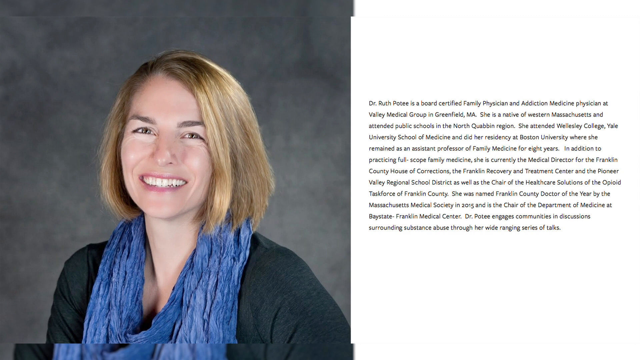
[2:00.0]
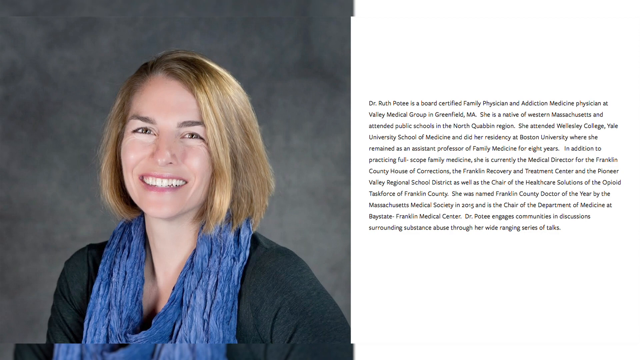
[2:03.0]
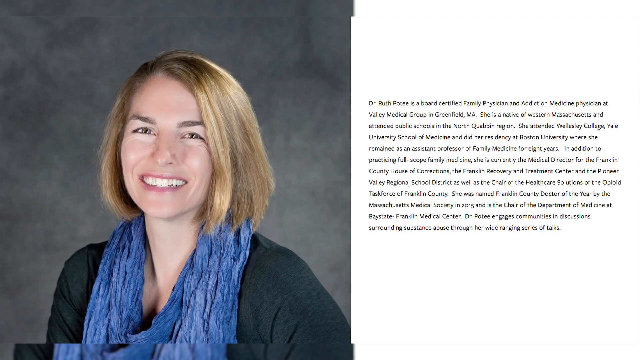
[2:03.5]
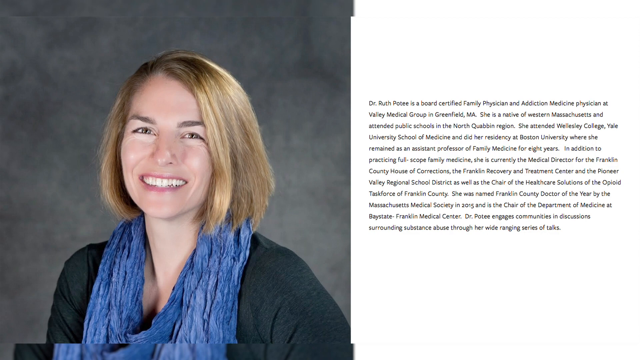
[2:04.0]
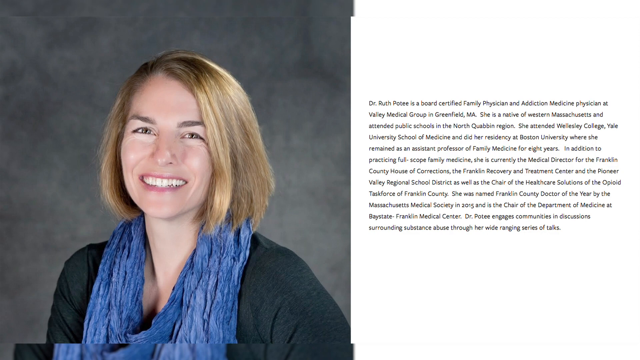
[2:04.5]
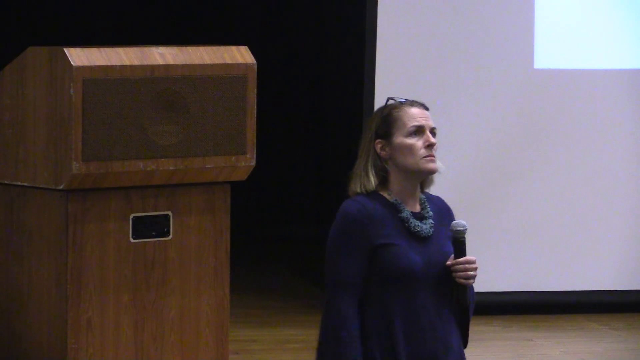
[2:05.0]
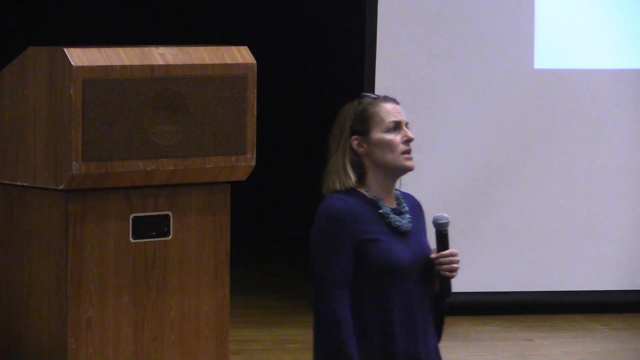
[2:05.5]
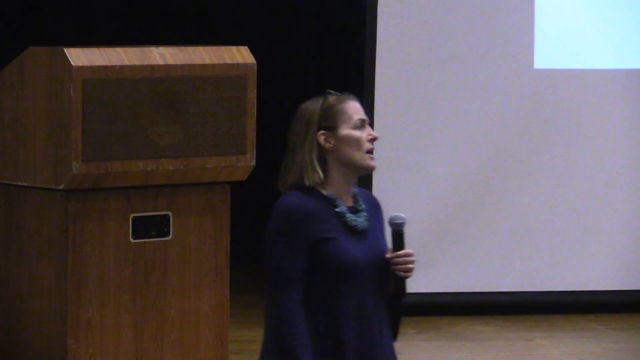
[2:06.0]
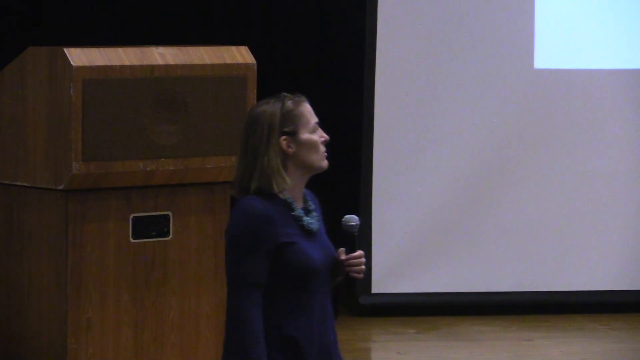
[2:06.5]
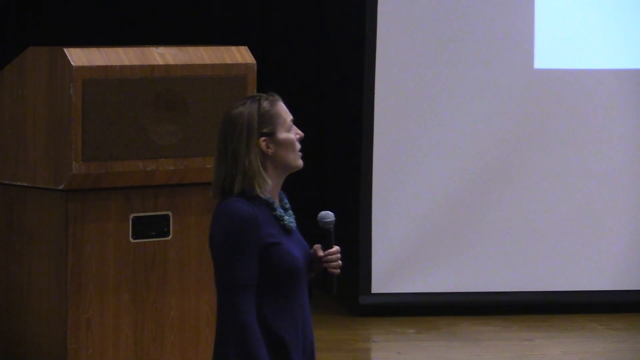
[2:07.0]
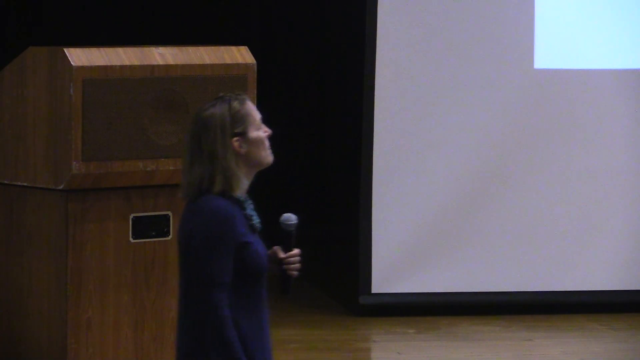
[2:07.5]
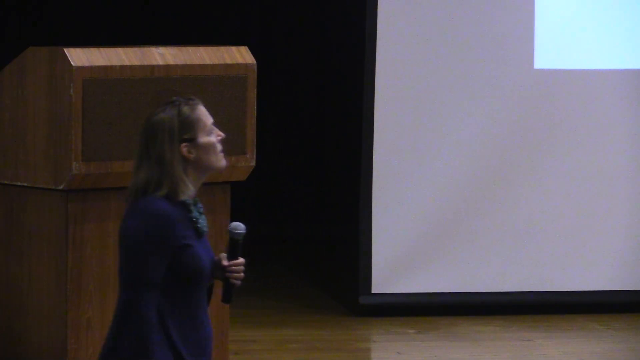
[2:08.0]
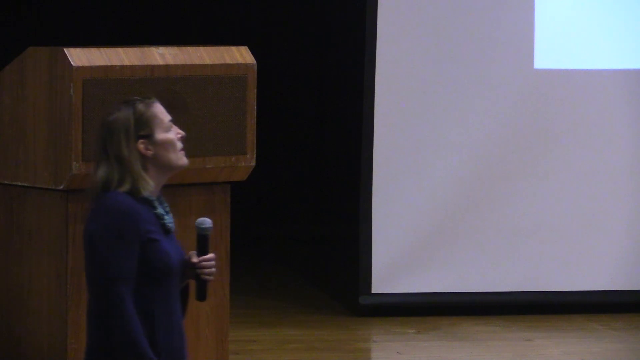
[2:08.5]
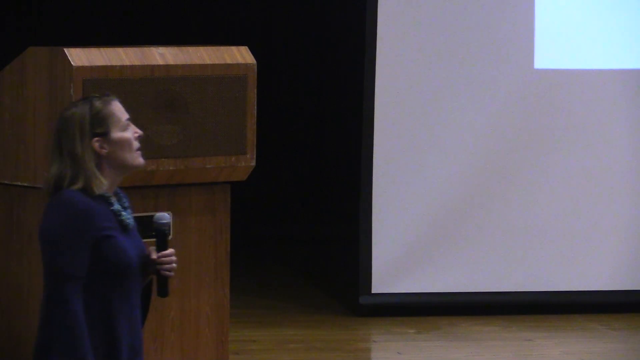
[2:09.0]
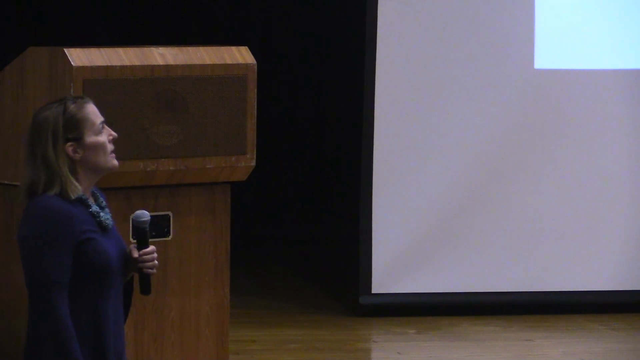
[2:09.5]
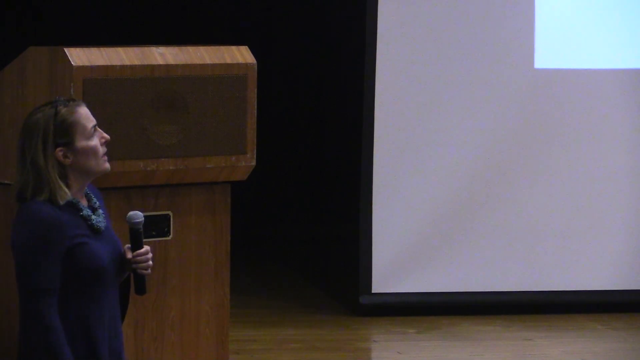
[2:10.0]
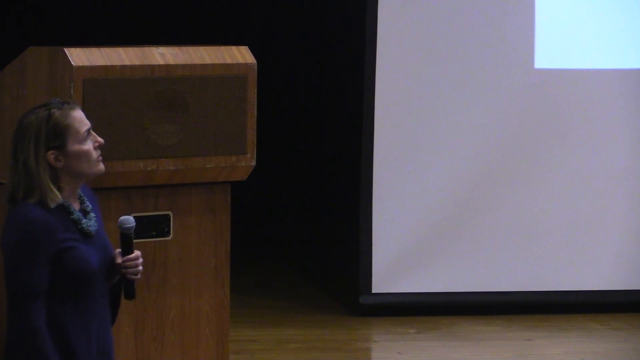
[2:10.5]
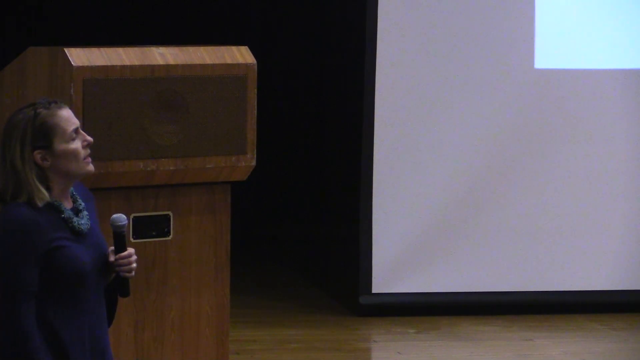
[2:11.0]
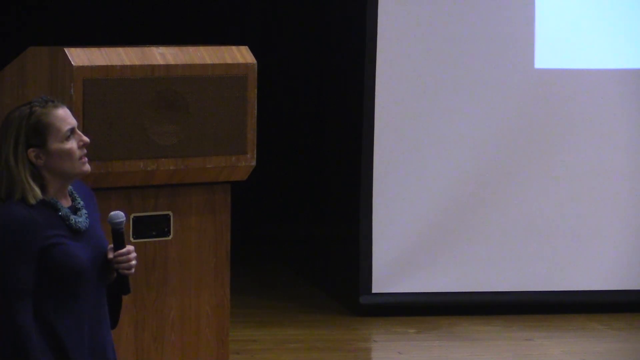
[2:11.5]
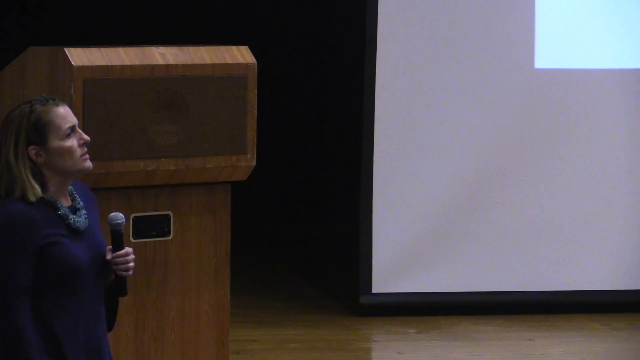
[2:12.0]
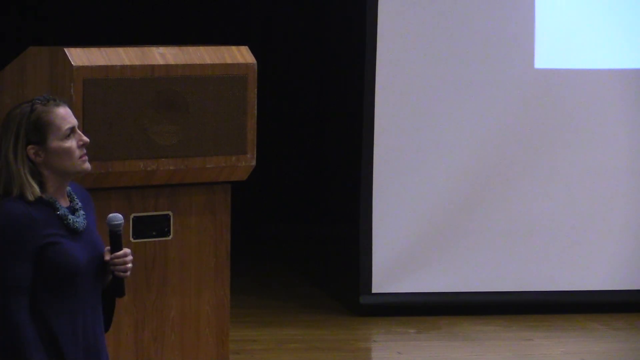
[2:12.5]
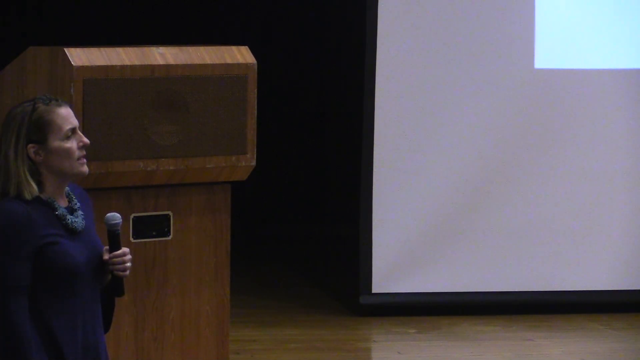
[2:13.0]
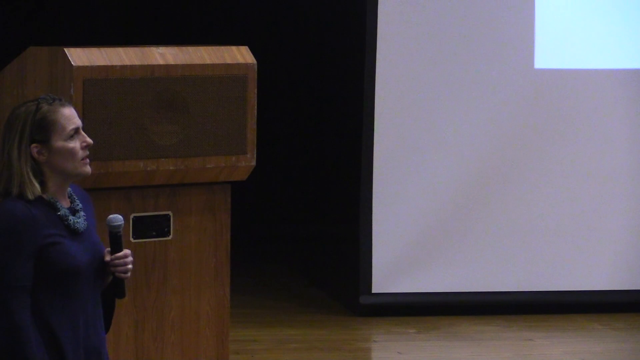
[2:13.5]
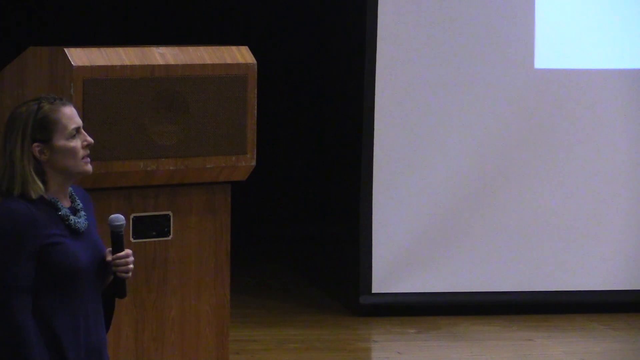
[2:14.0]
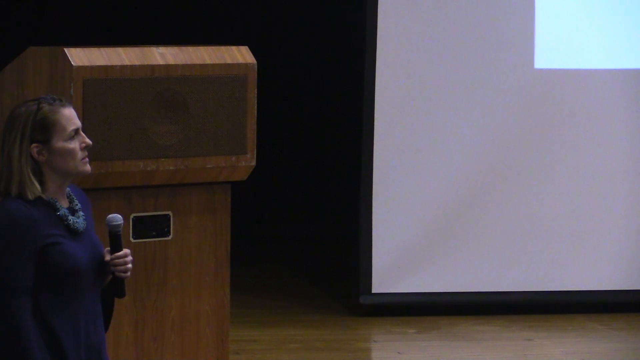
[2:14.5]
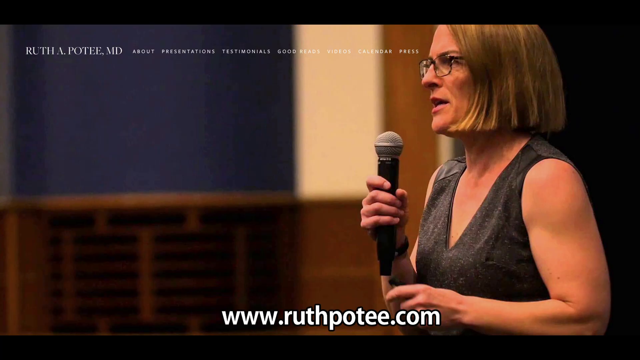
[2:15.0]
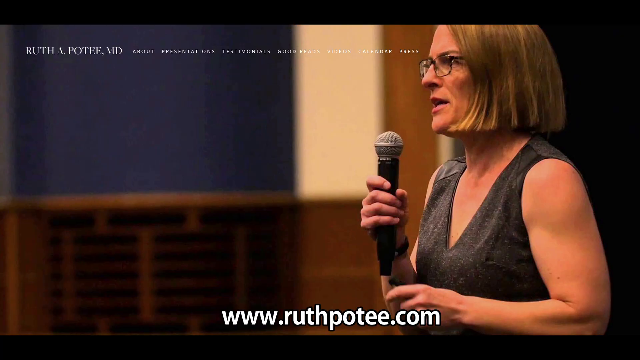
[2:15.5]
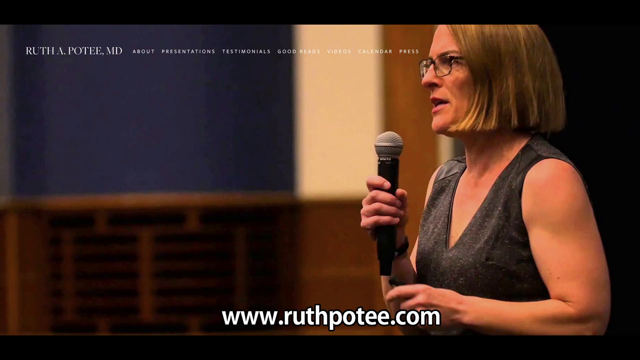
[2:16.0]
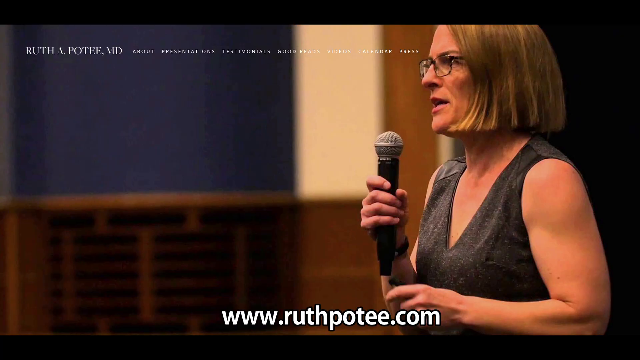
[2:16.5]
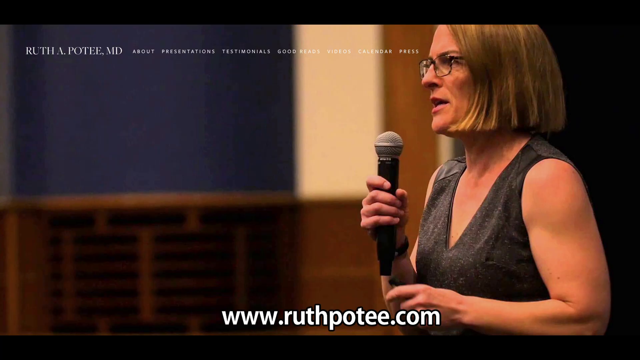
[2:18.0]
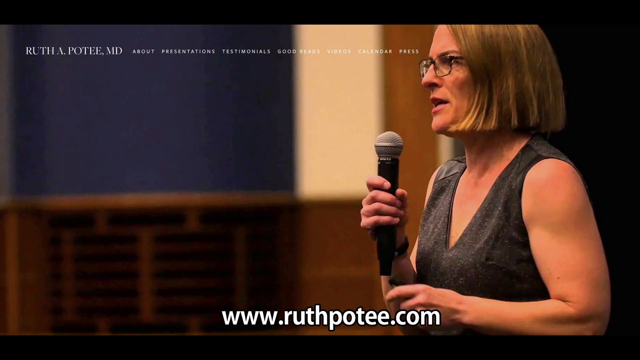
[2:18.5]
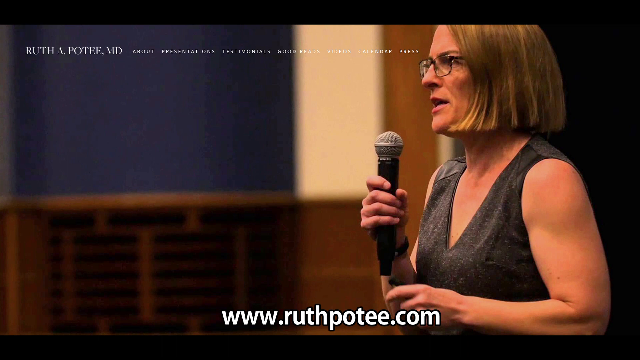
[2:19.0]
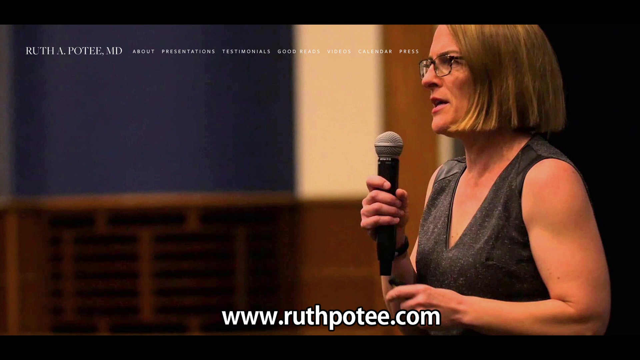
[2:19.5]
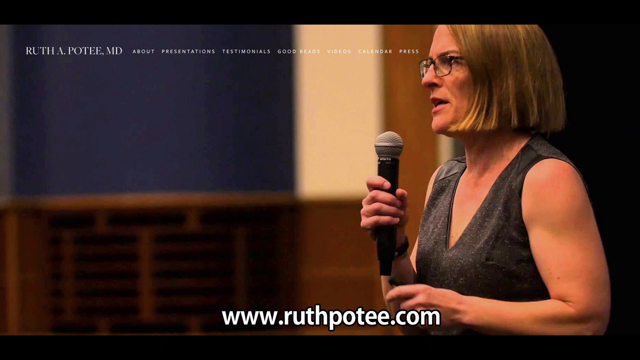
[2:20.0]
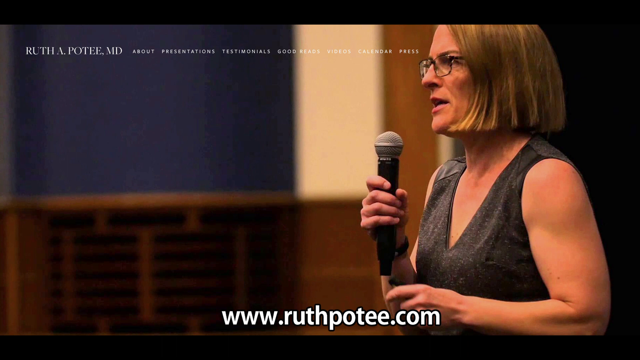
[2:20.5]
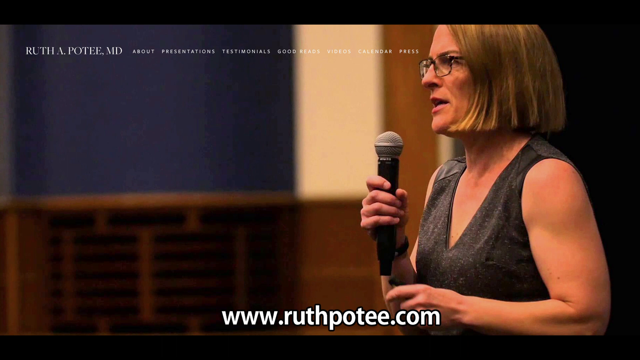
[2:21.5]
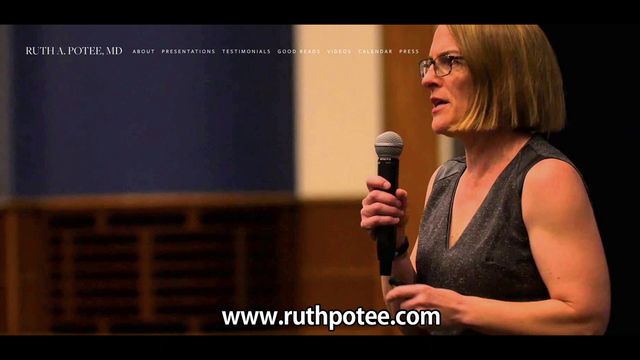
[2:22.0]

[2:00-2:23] The lecturer's credentials are shown. On the right side of the screen it says "Dr. Ruth Potee is a board certified family physician and addiction medicine physician in Valley Medical Group in Greenfield, Massachusetts. She is a native of Western Massachusetts" and "She attended Wesleyan College, Yale University School of Medicine and did her residency at Boston University, where she remained as an assistant professor of family medicine for eight years." It continues that "she is currently the medical director for the Franklin County House of Corrections, the Franklin Recovery and Treatment Center, and the Pioneer Valley Regional School District, as well as the chair of the Healthcare Solutions of the Opioid Task Force of Franklin County. She was named Franklin County Doctor of the Year by the Massachusetts Medical Society in 2015, and is the chair of the Department of Medicine at Baystate Franklin Medical Center. Dr. Potee engages communities in discussions surrounding substance abuse."